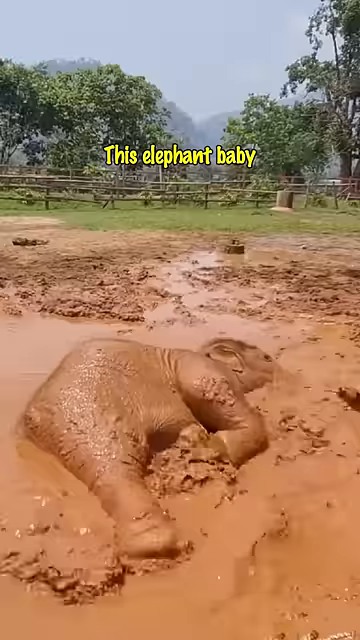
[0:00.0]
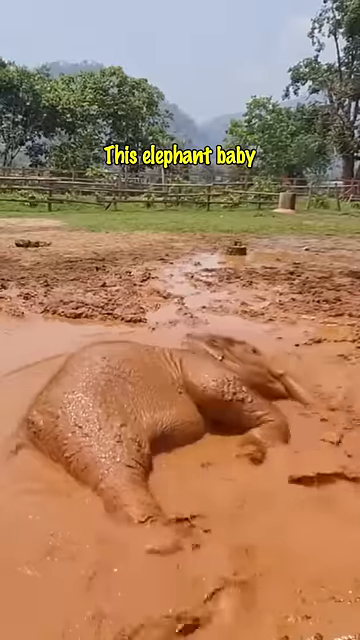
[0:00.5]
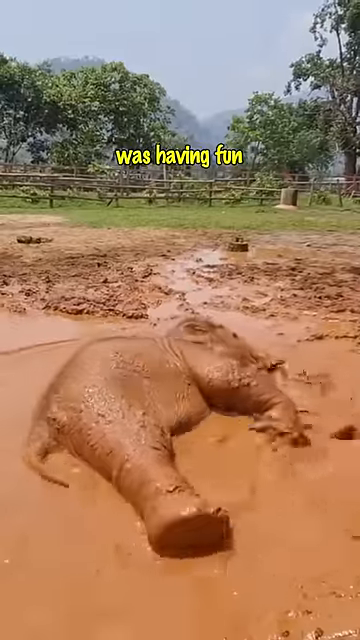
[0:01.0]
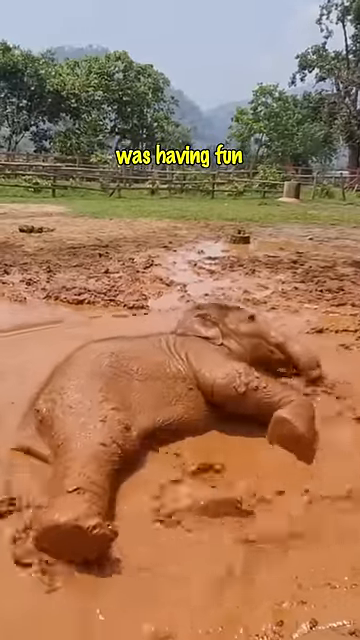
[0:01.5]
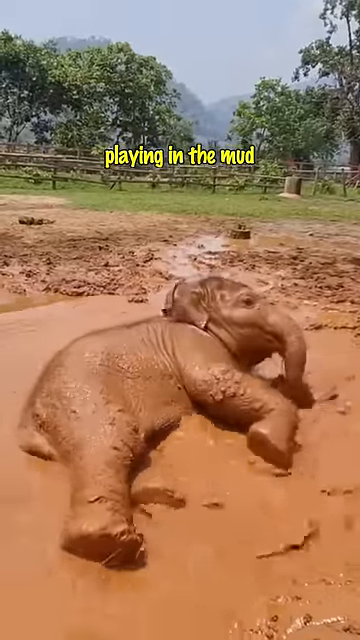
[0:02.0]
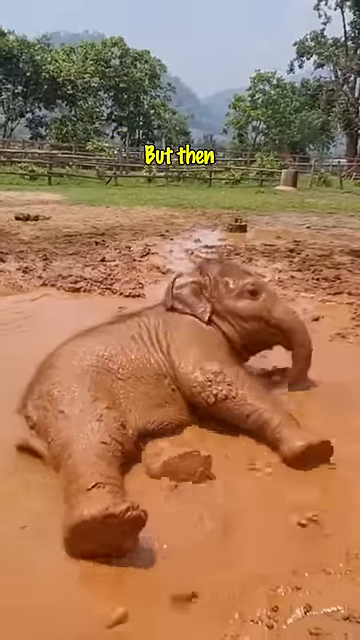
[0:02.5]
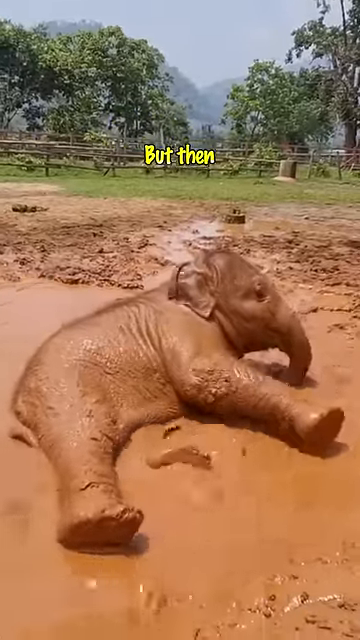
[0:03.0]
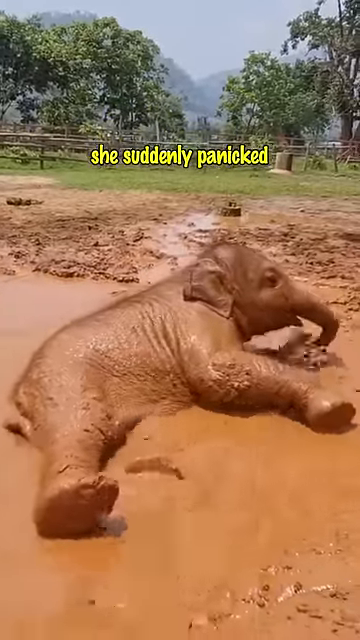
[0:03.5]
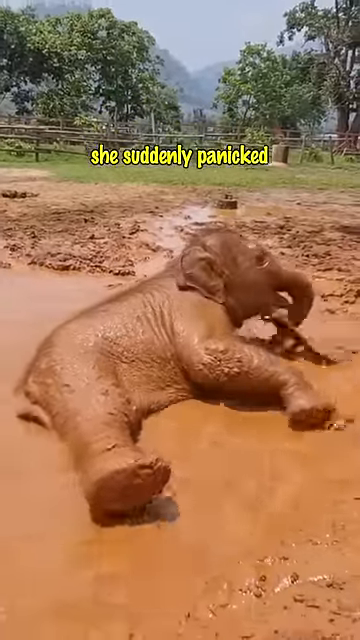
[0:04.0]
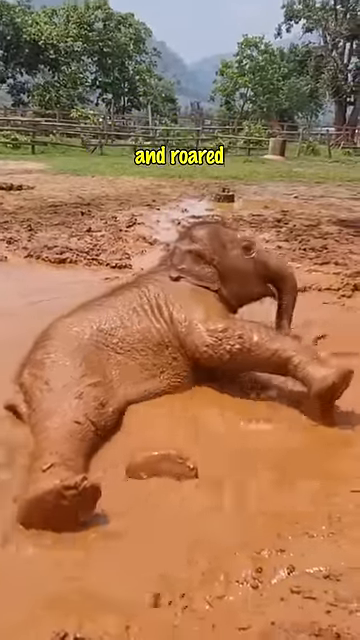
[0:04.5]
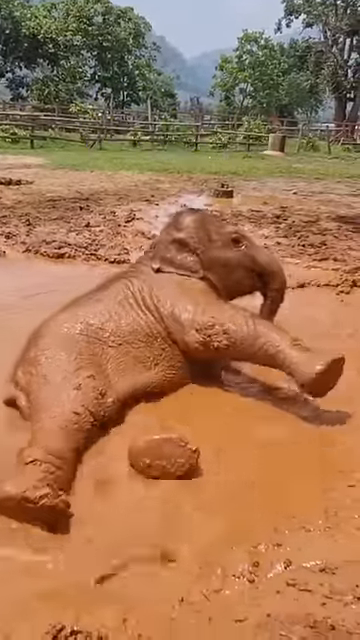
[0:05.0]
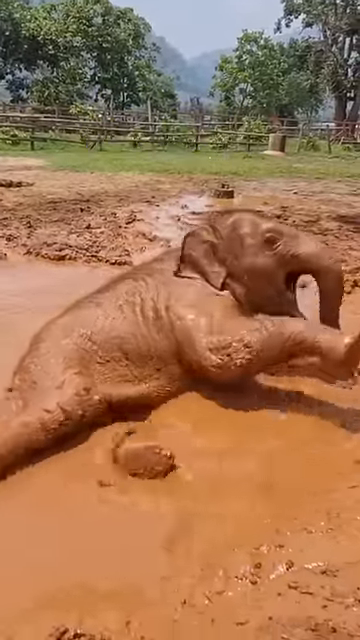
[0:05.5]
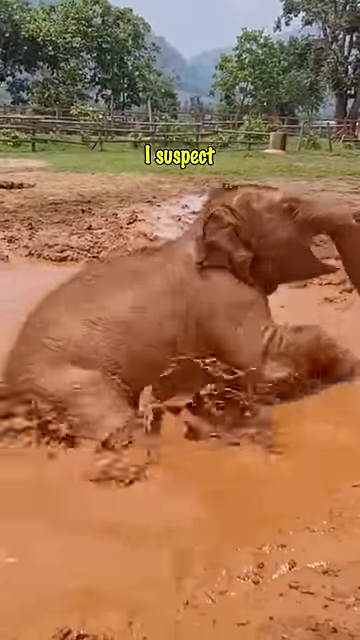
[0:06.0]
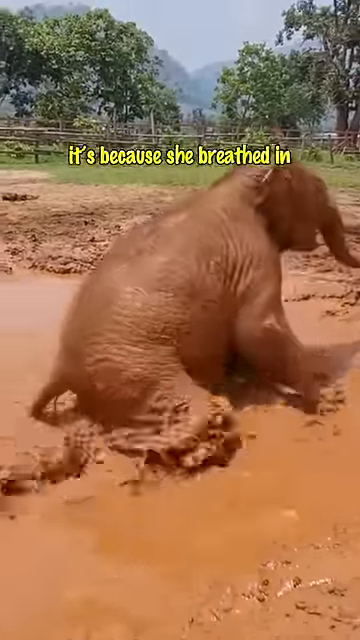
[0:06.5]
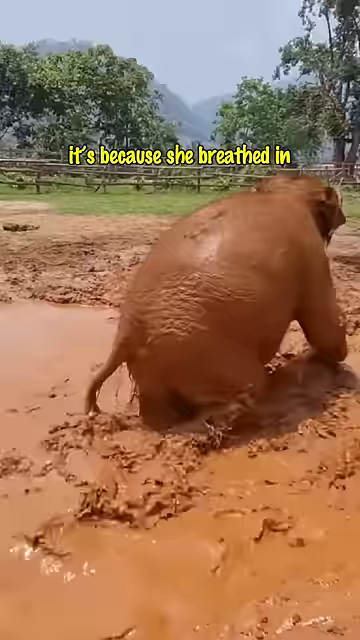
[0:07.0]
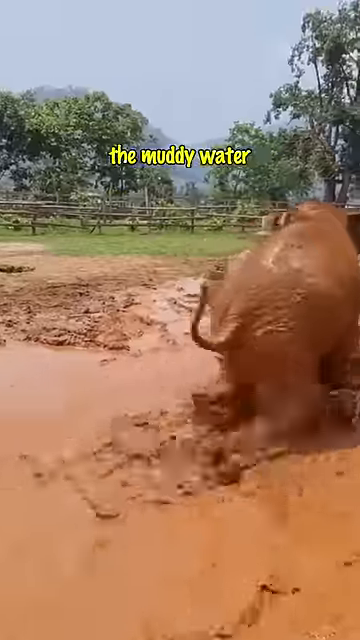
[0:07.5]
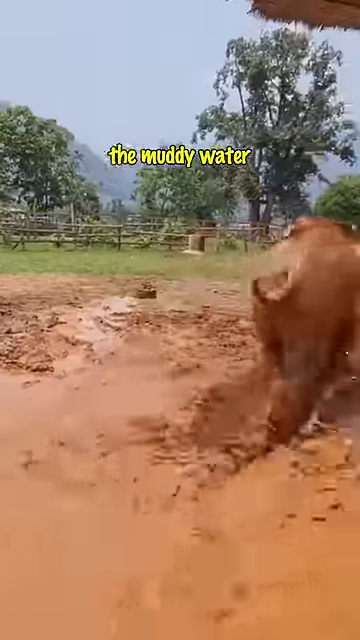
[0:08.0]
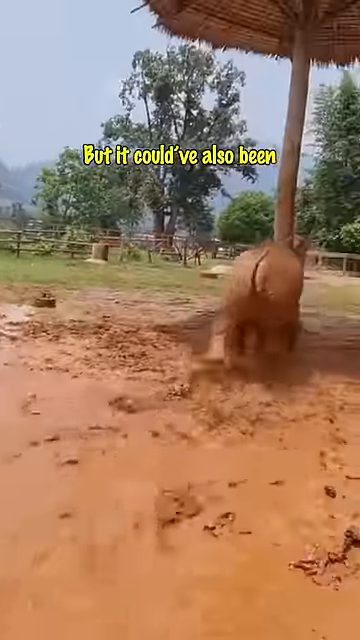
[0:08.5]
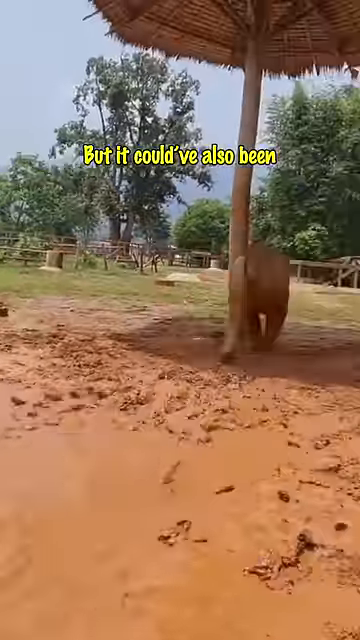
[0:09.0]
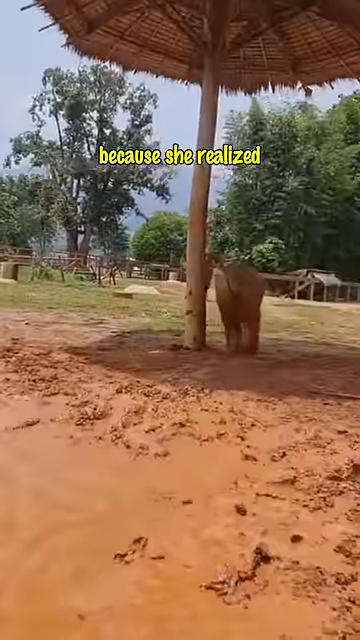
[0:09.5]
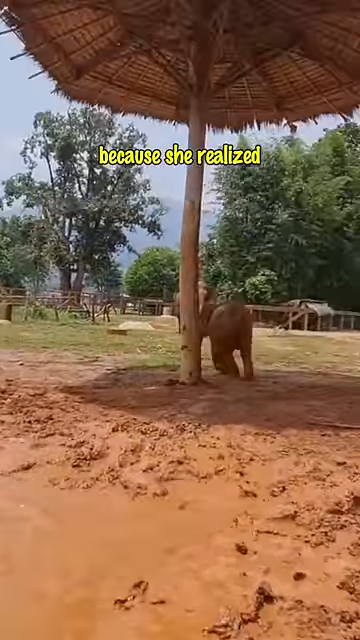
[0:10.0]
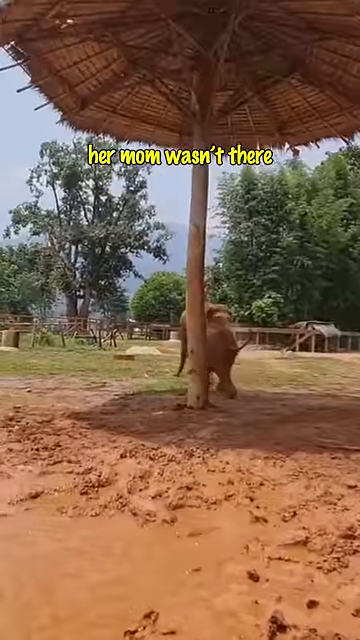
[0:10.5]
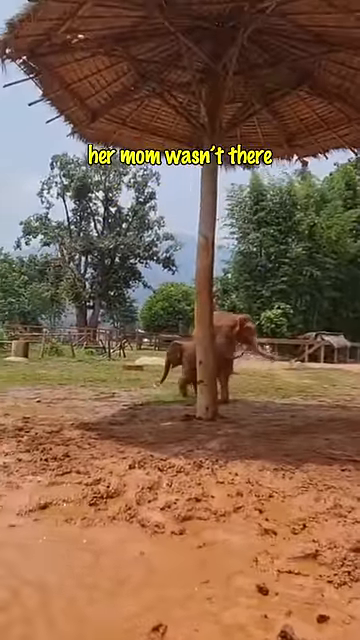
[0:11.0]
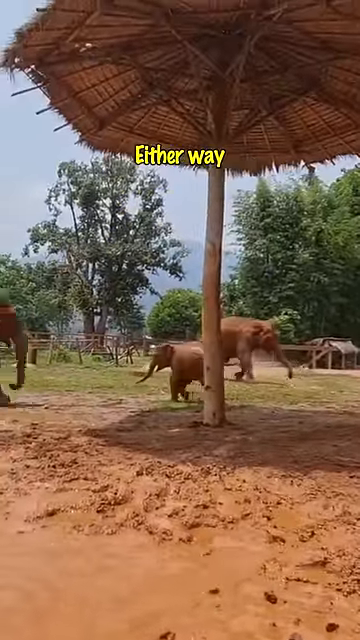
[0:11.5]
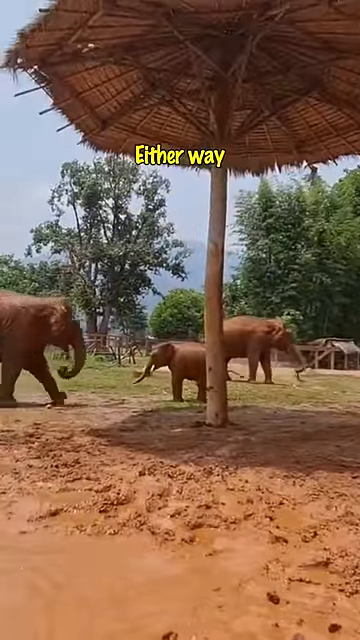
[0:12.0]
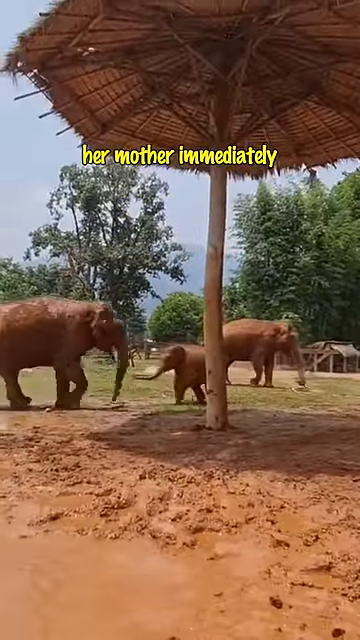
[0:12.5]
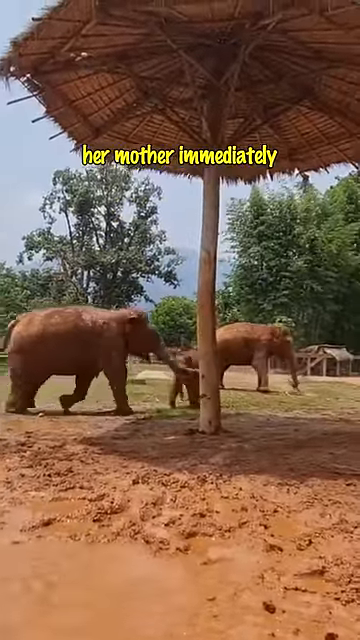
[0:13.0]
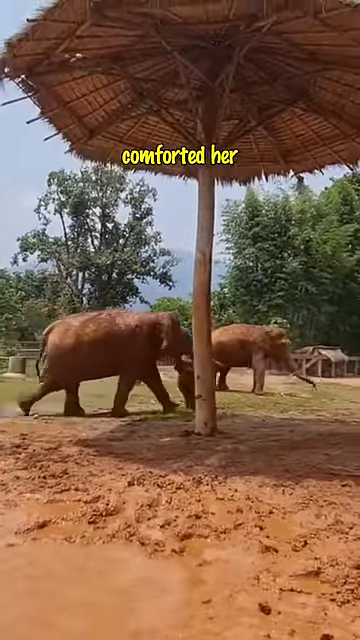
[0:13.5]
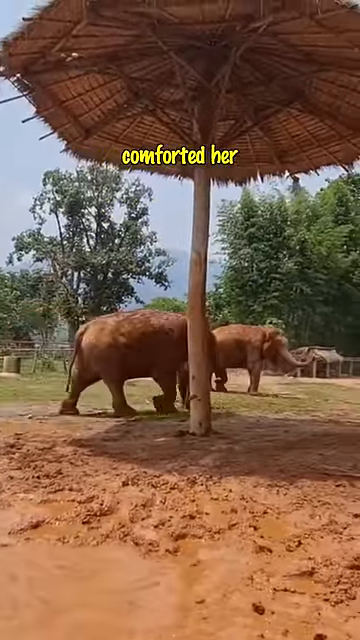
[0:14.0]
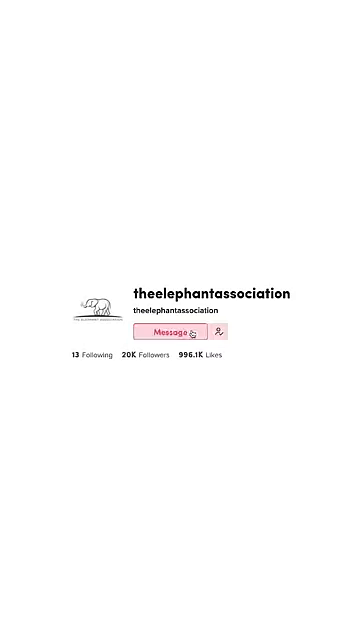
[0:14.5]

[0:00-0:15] What looks like a baby elephant is in a makeshift pond, probably formed by rain. It gets up and runs off, going under what resembles a giant version of one of the little things put in drinks. The setting looks like a farm. Two other elephants come into the picture. There is green, and it is summer; the weather appears to be hot. Something like mountains is visible in the background, and the day is kind of grayish. The elephants, or at least the little baby elephant, look like they are having fun. The water is muddy, not clean, and the place looks like a farm of some sort.